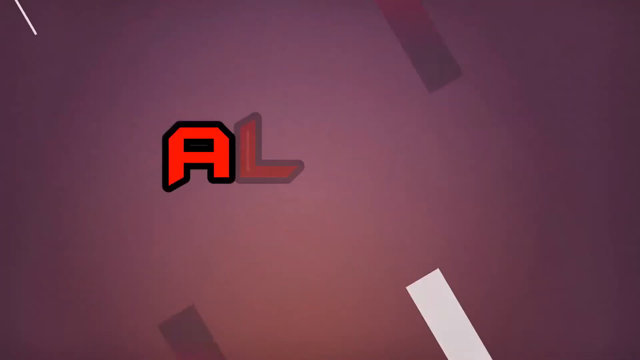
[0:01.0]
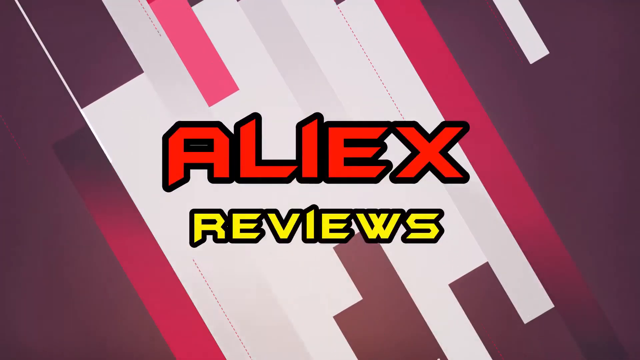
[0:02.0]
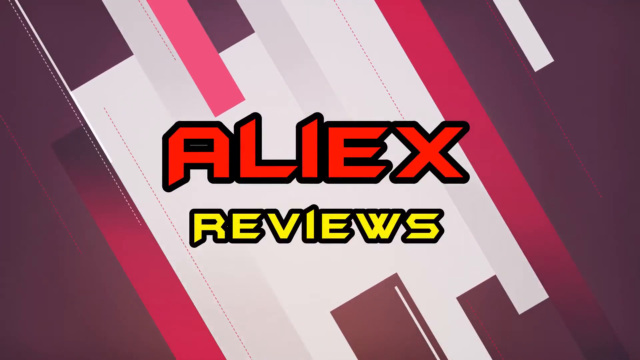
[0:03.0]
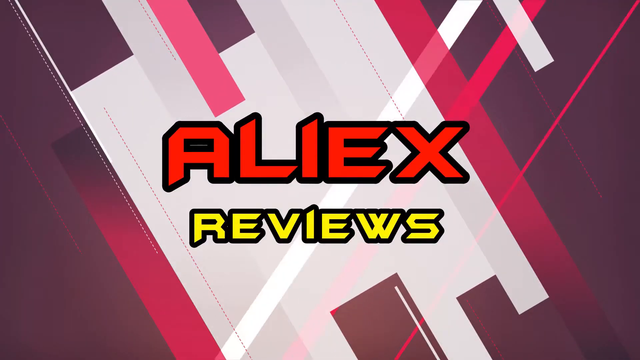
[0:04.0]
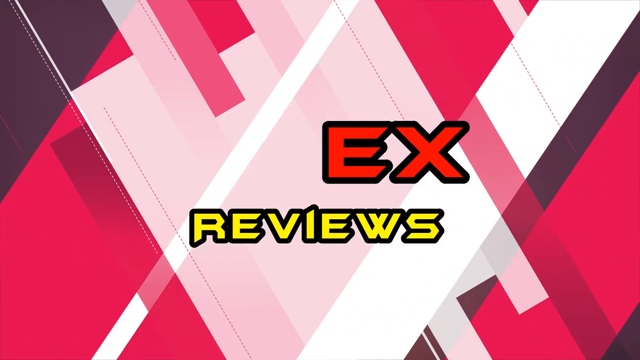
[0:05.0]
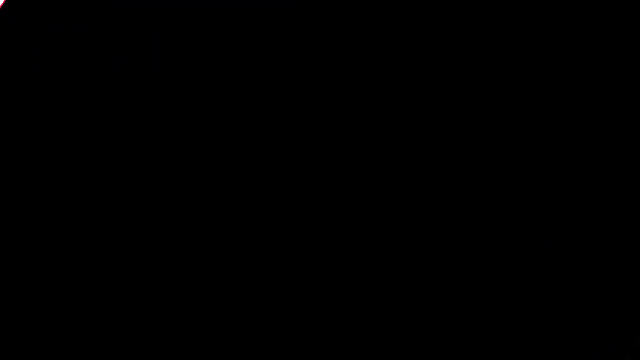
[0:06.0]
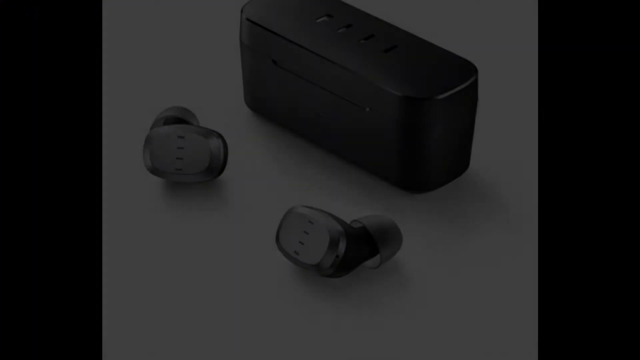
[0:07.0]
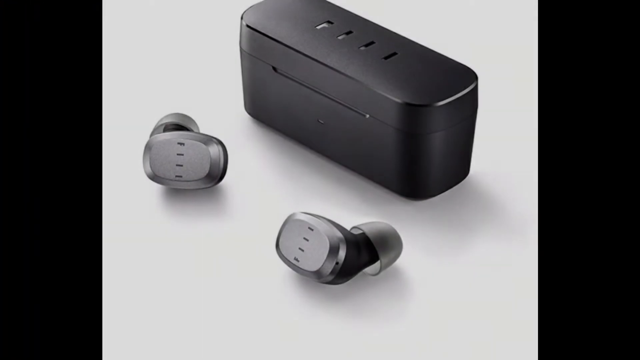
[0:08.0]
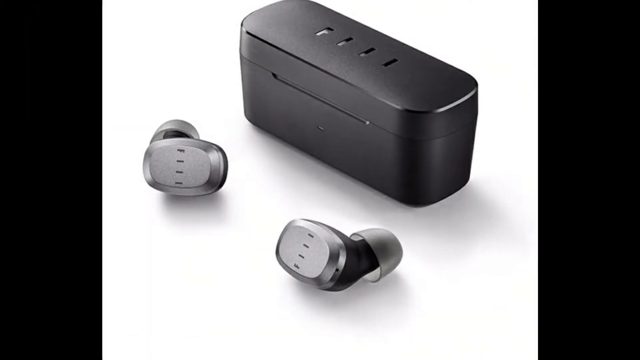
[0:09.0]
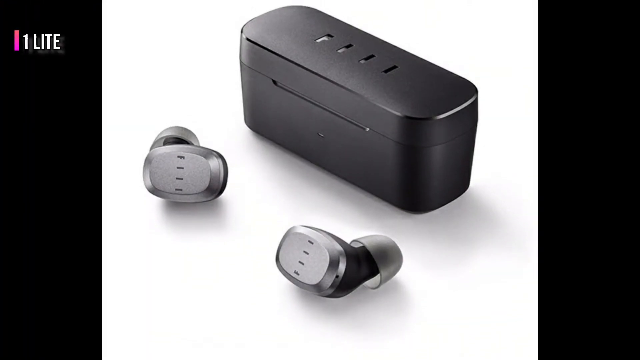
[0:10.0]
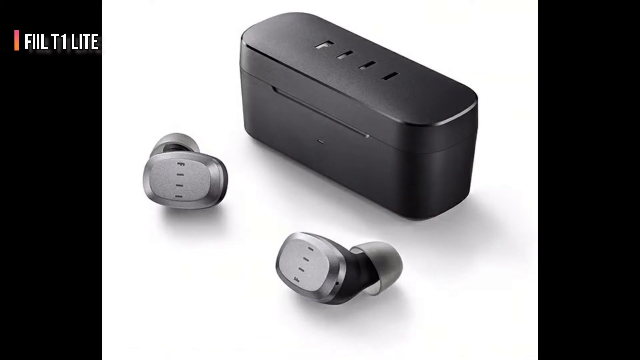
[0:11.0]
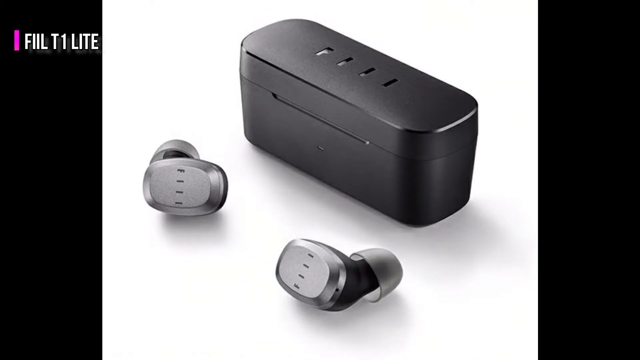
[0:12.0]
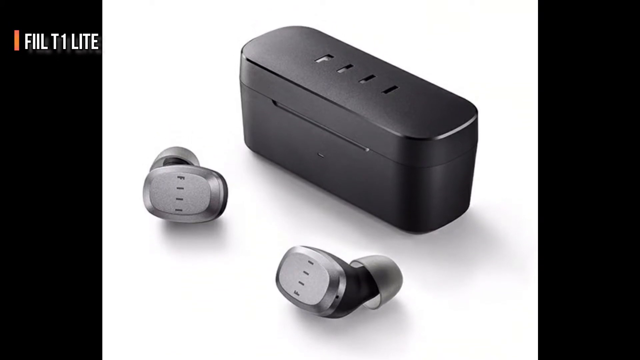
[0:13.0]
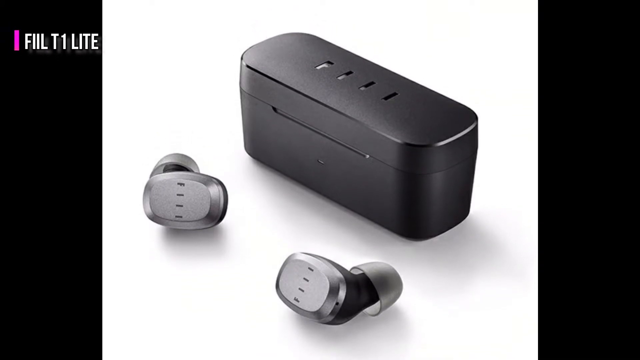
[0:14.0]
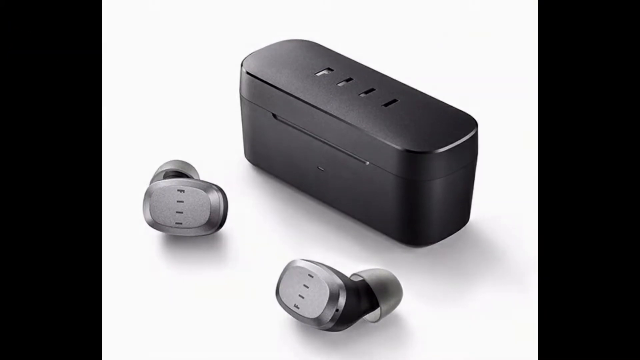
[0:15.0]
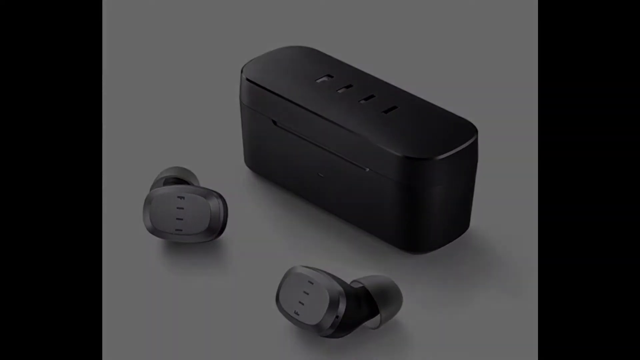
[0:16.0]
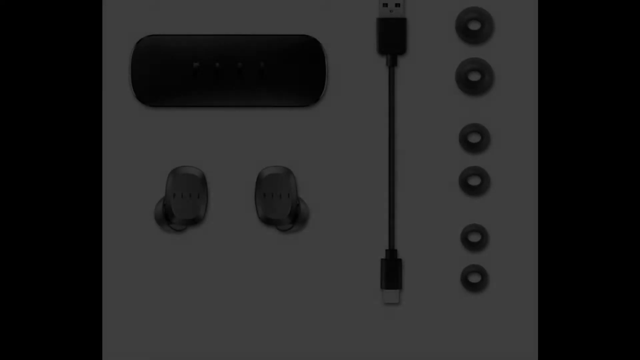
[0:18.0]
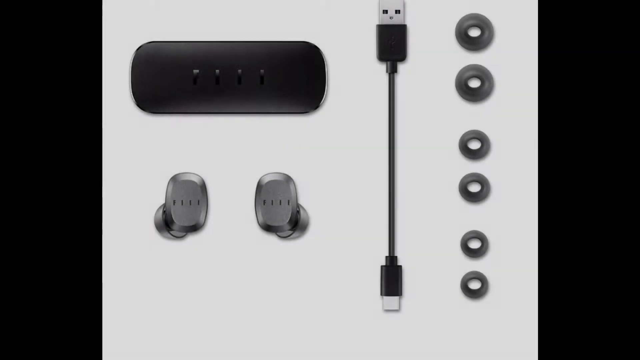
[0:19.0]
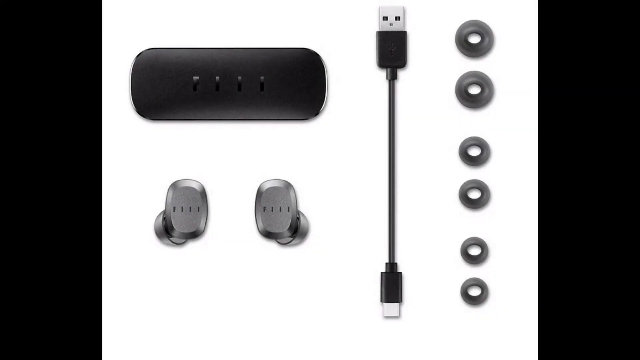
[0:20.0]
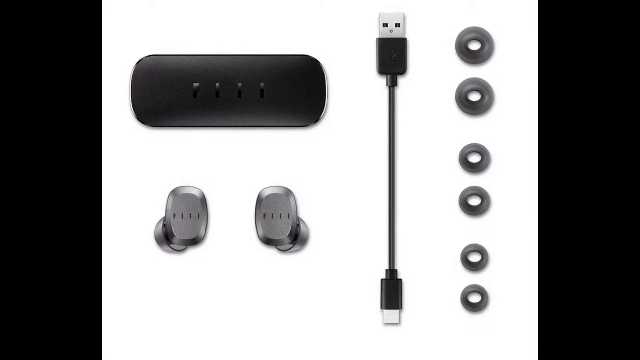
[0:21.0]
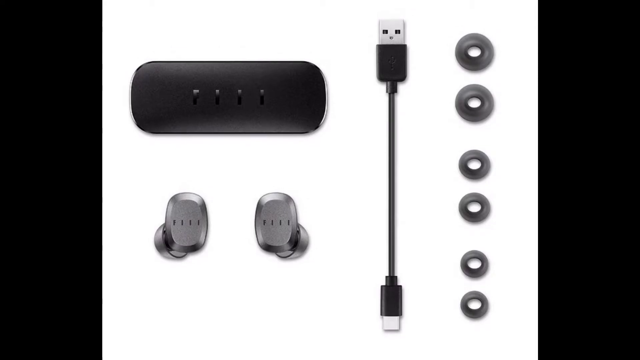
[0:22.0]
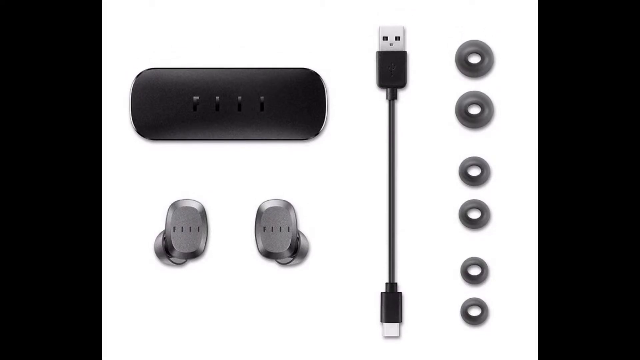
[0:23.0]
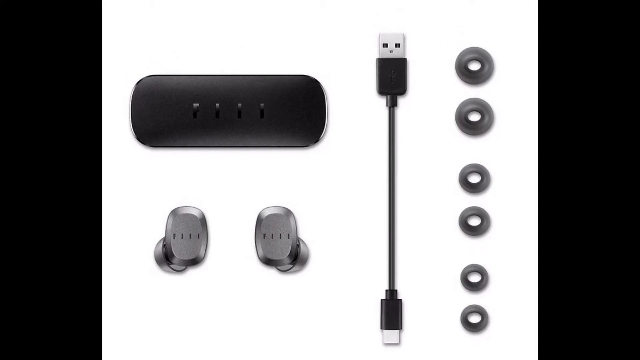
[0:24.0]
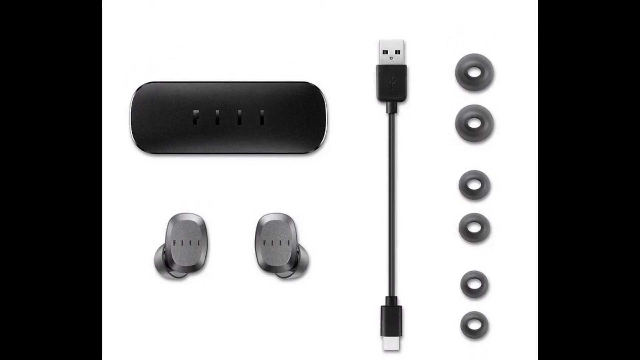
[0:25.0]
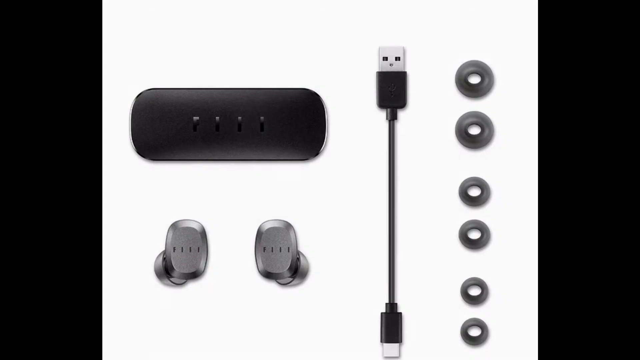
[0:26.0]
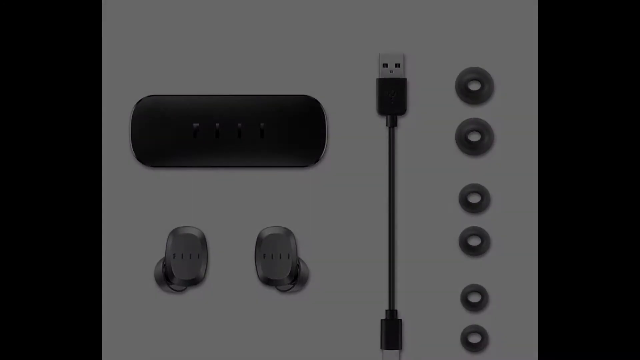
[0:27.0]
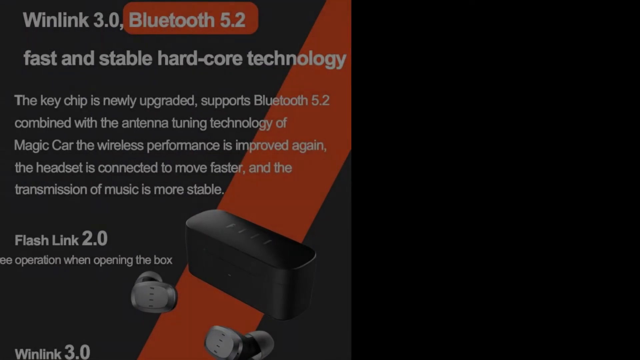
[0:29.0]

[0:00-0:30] The video, entitled Aliex Reviews, begins with digital graphics of purple, white and red lines moving around. It then cuts to an image of digital headphones that look like the equivalent of AirPods: a pair of them lies on a white desk along with the carrier used to store them. Text identifies them as the "Fiil T1 Lite". The earbuds are black, as is the carrying case. Another image shows the pods laid out on a tabletop, viewed directly from above, revealing the parts of the pods that fit into the ear and the top of the carrying case. There is also a quite short charging cable with a USB connector and three pairs of plastic washers, apparently spares to replace the originals as they wear out. The view scrolls up the screen over these components. Next comes a page advertising "Winlink 3.0, Bluetooth 5.2".